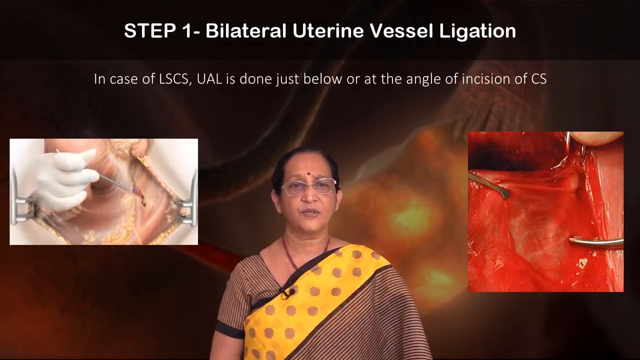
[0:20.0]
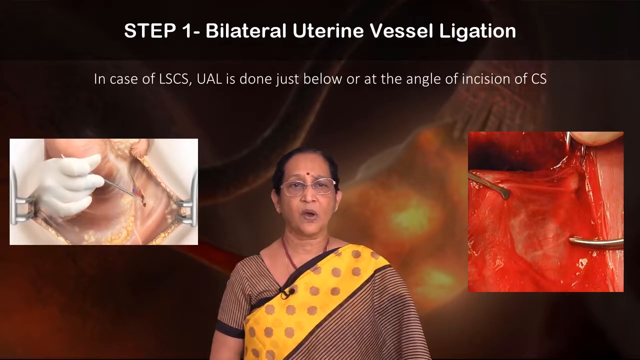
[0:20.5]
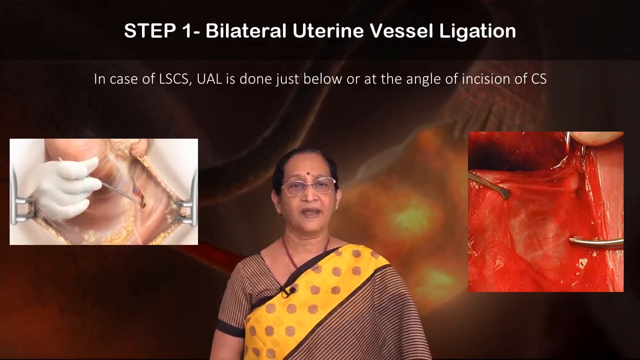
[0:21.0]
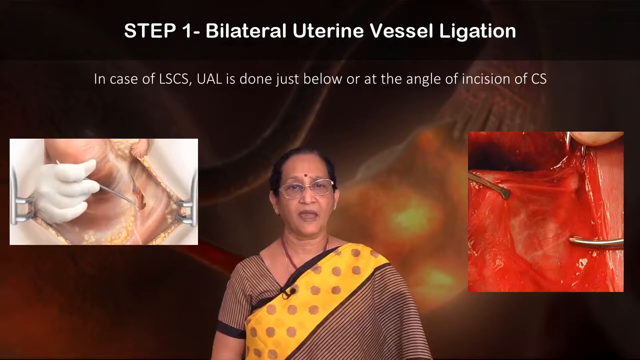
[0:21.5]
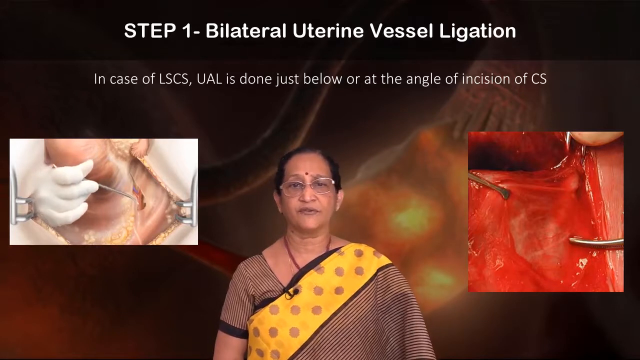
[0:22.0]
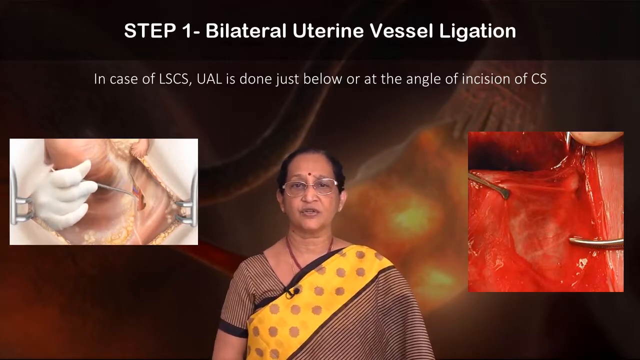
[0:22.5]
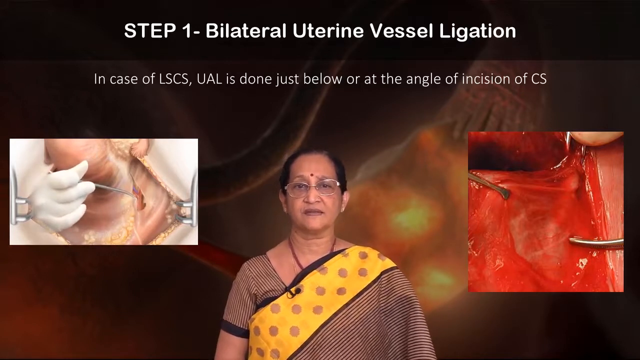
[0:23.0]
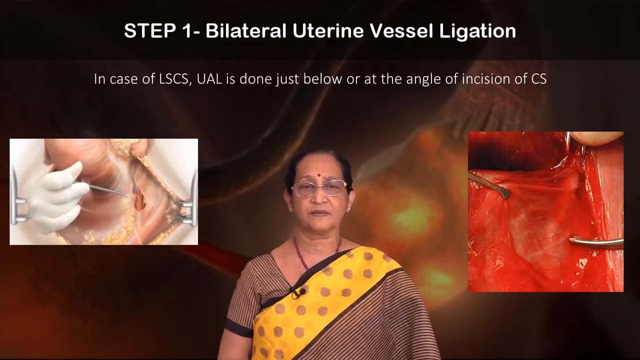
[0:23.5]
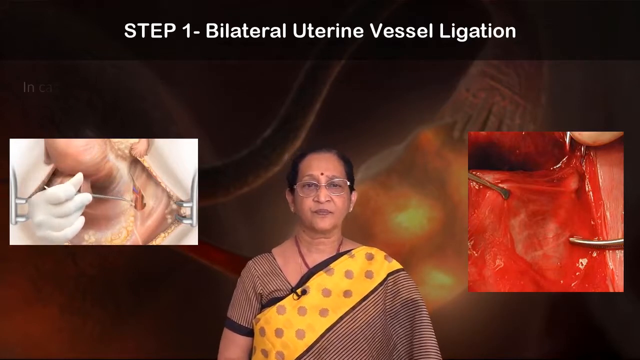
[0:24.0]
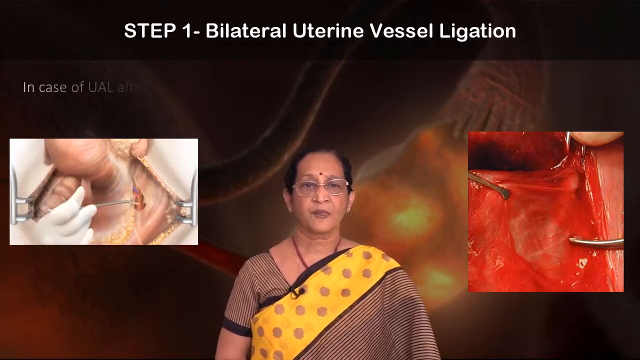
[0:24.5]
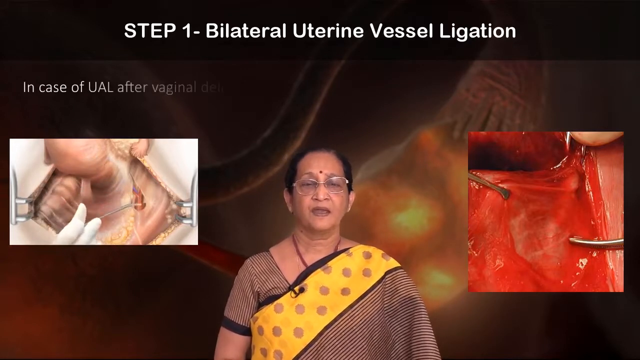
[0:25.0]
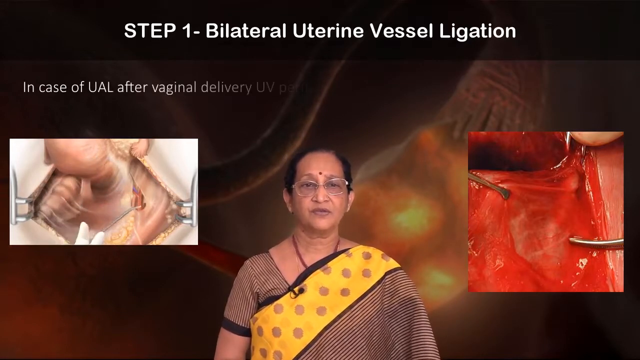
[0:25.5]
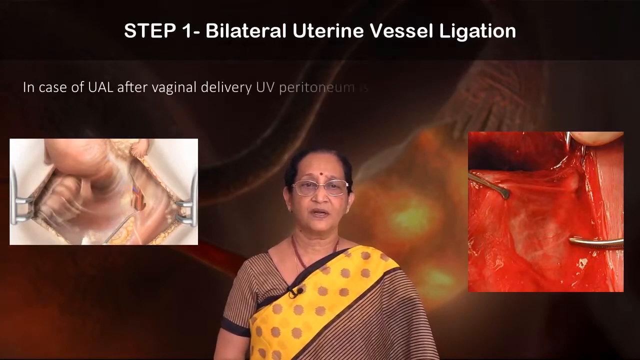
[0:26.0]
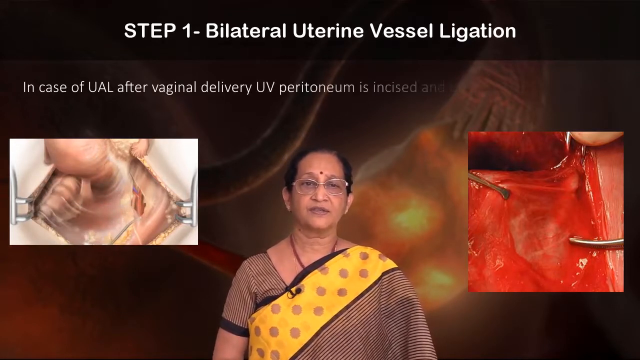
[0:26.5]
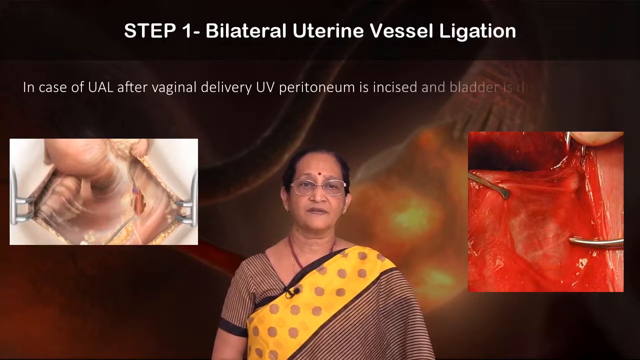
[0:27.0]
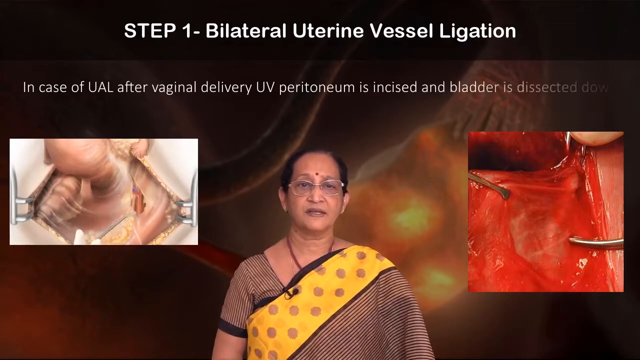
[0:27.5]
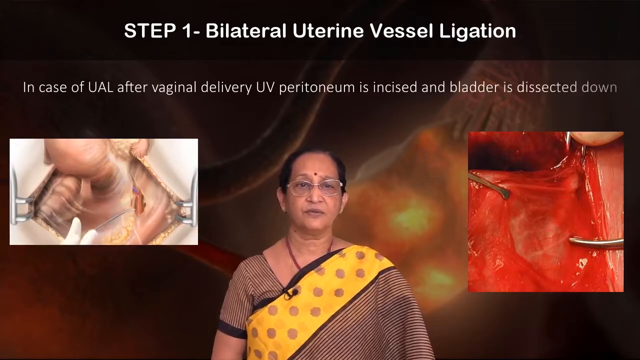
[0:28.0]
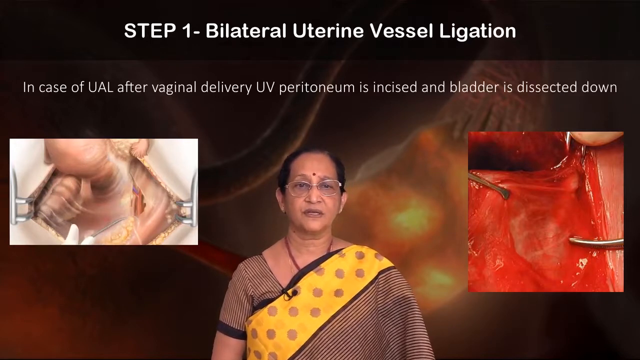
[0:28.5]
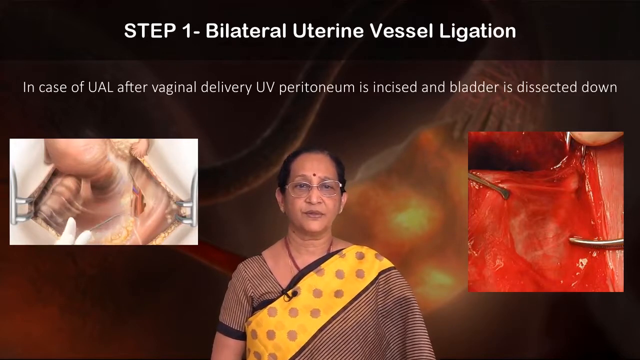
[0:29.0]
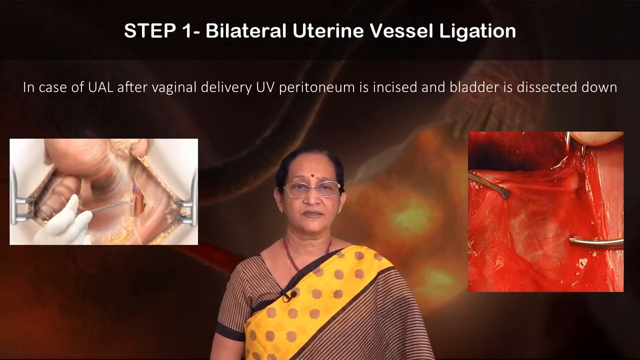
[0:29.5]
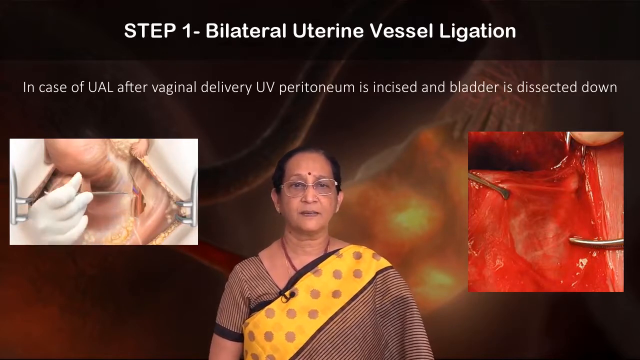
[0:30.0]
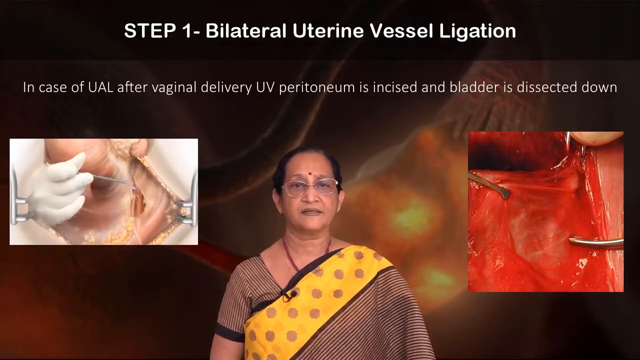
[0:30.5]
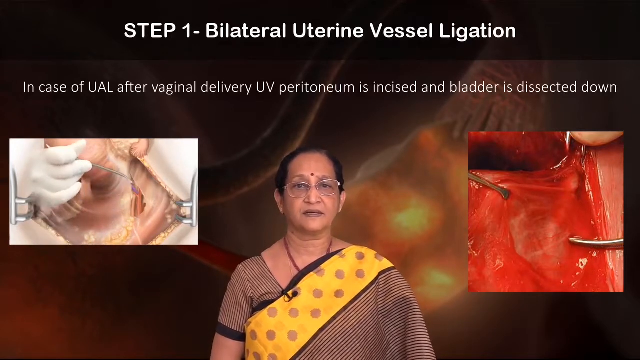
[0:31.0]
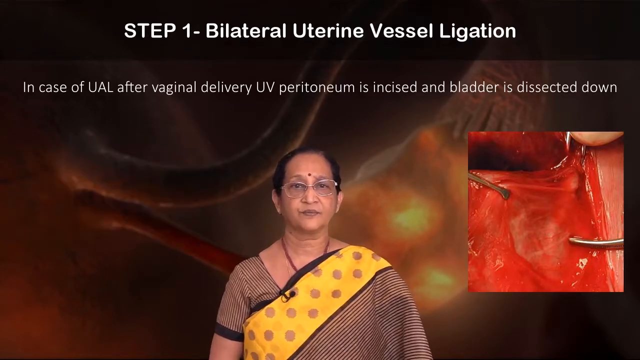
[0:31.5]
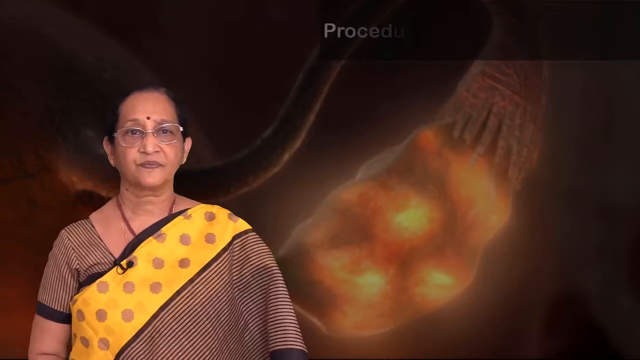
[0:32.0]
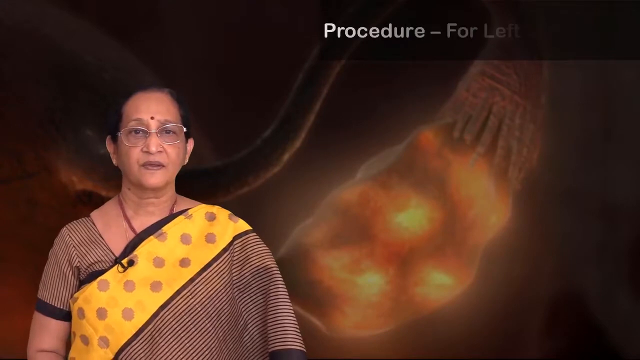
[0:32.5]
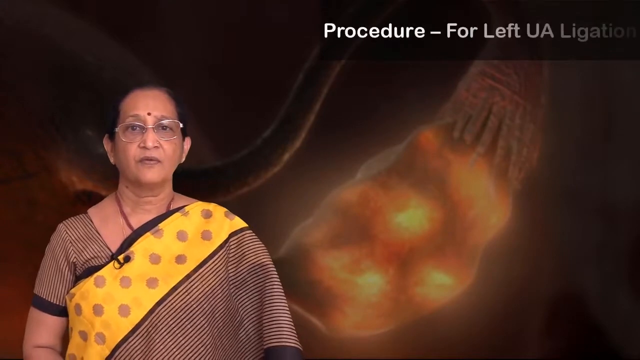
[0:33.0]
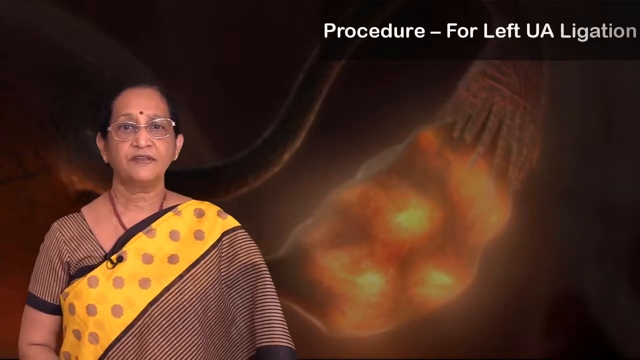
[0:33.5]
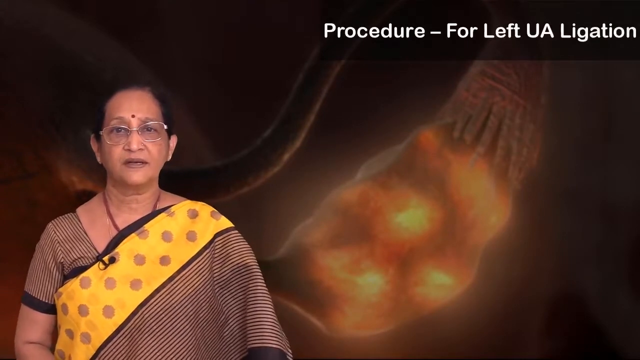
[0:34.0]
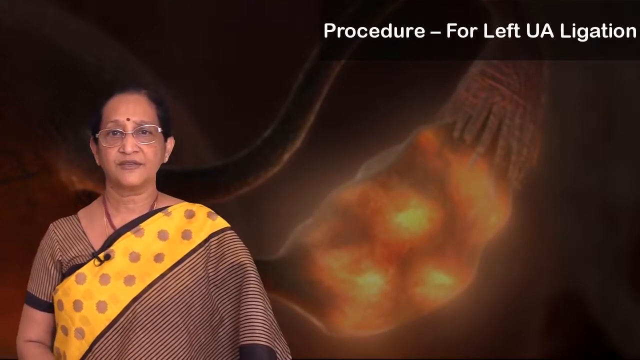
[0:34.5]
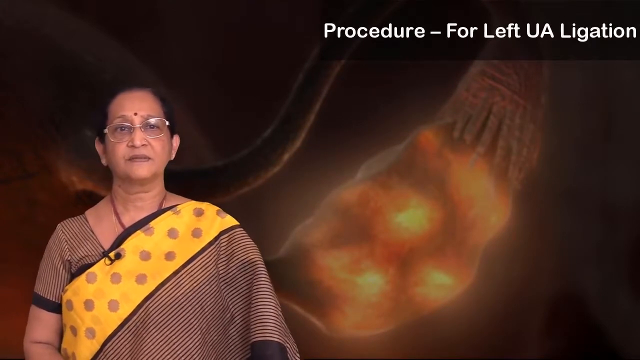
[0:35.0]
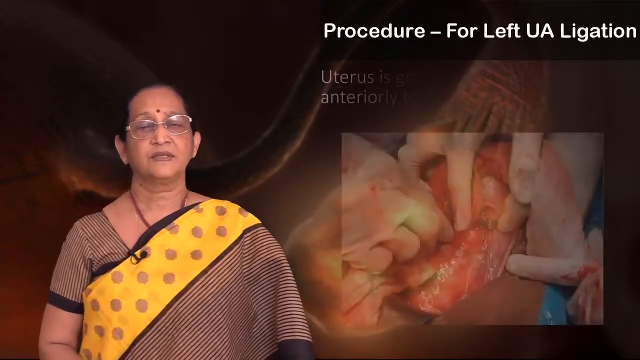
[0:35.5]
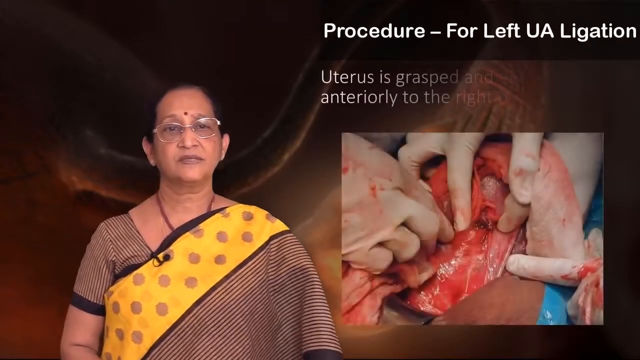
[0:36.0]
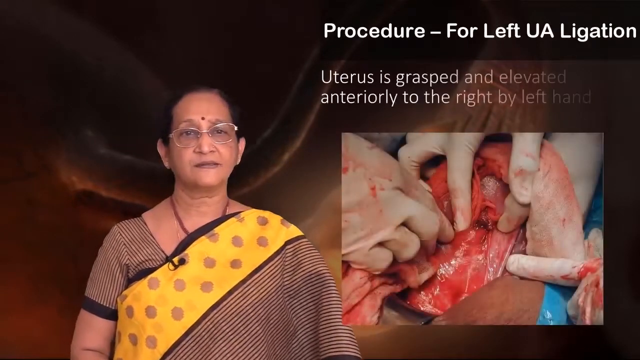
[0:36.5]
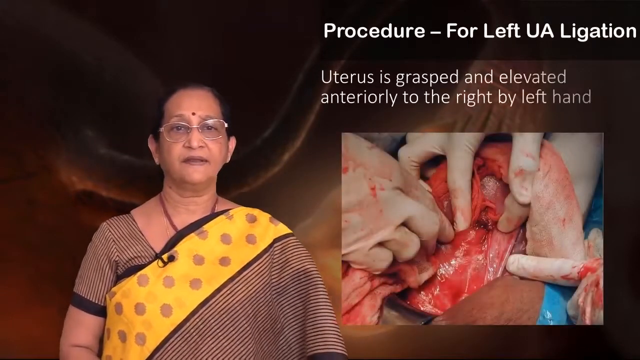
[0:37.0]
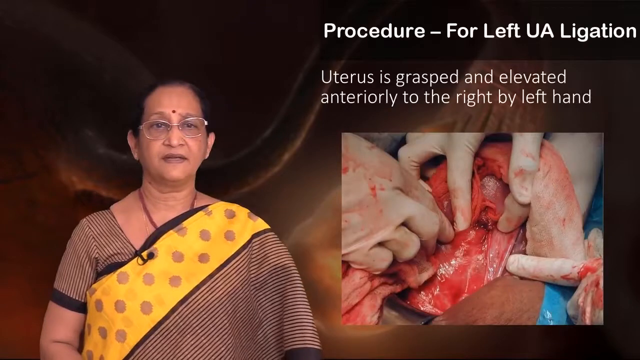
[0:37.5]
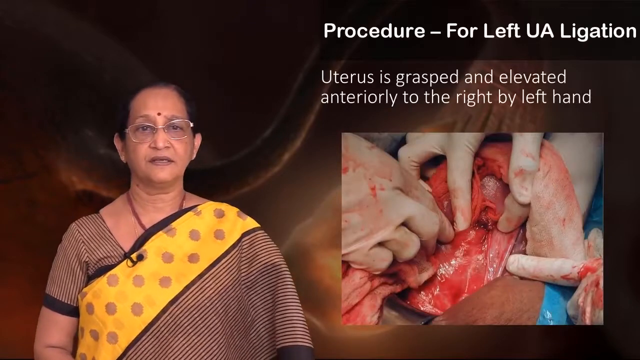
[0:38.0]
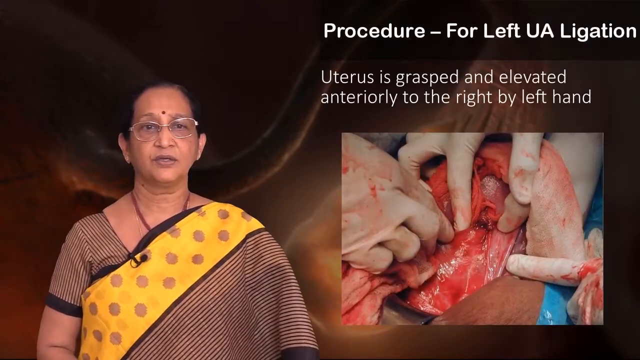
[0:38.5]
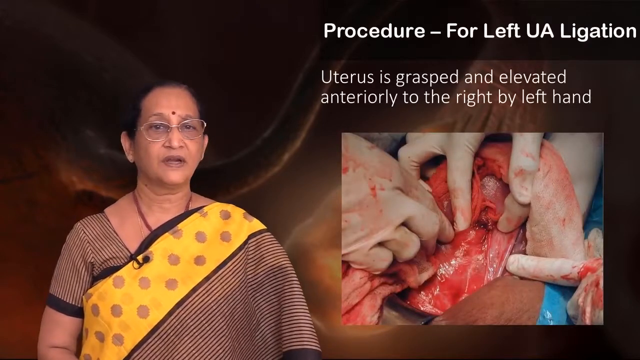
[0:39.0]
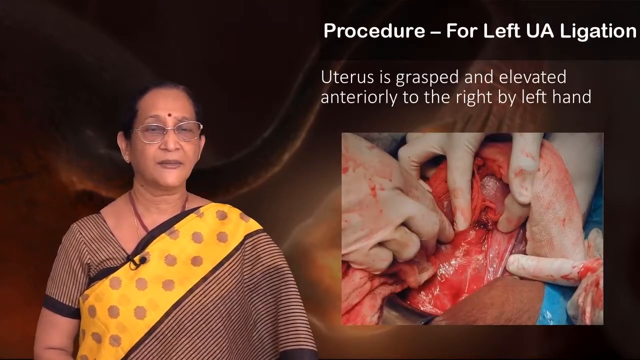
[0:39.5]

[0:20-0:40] The woman faces the camera as she speaks, with a very neutral expression. The picture on the left shows a surgeon making moves. More text appears, reading "in case of UAL after vaginal delivery UV peritoneum is incised and bladder is dissected down", and the picture on the left apparently shows somebody cutting into the bladder, perhaps. The shot then changes: she is now on the left side of the screen, and at the top of the right side is a title in white words on a small black rectangle, reading "procedure for left UA ligation". Text fades in beneath it, reading "uterus is grasped and elevated anteriorly to the right by left hand". Below that is a picture of white-gloved hands grabbing what looks like the flesh of a uterus inside a body, with some blood visible. It all looks very surgical and professional.